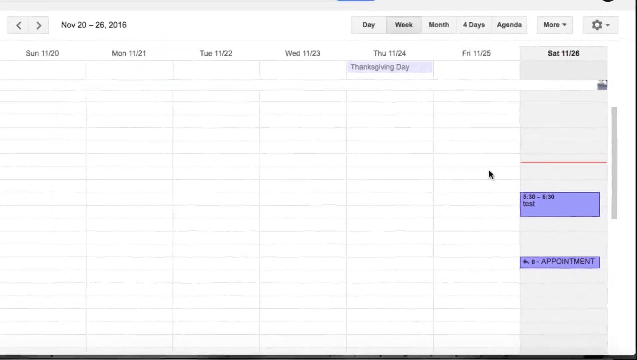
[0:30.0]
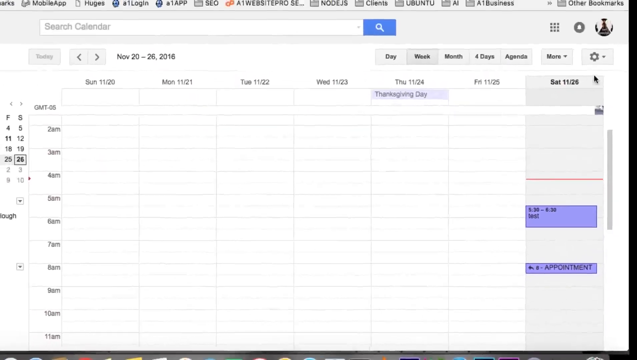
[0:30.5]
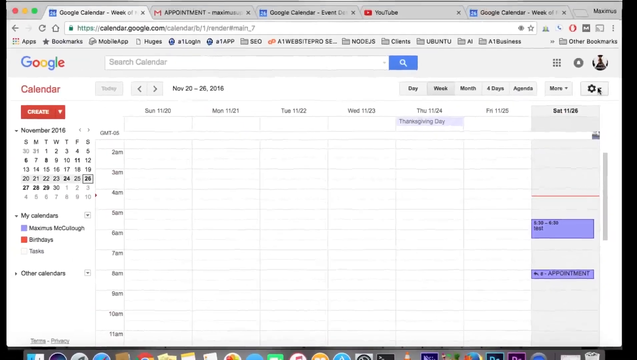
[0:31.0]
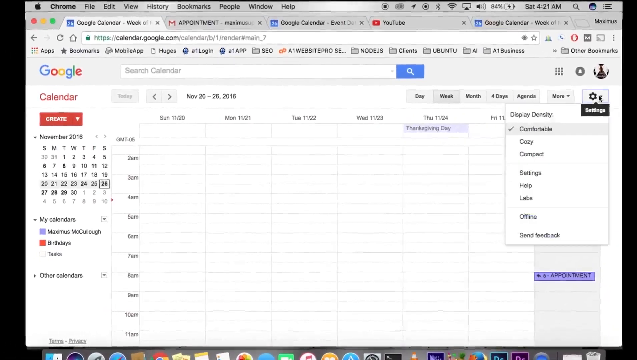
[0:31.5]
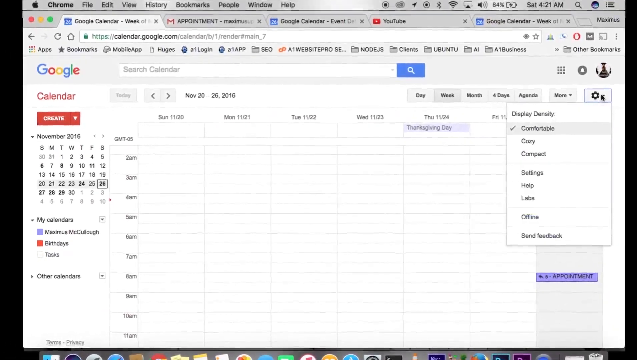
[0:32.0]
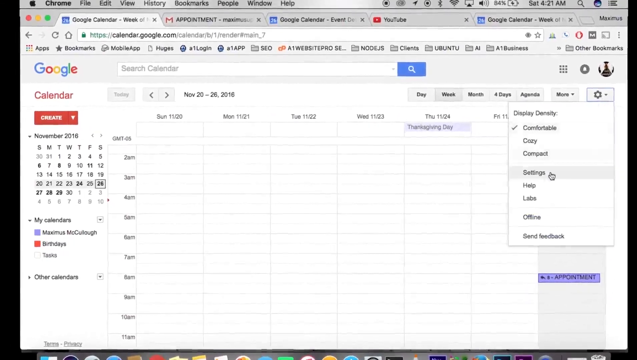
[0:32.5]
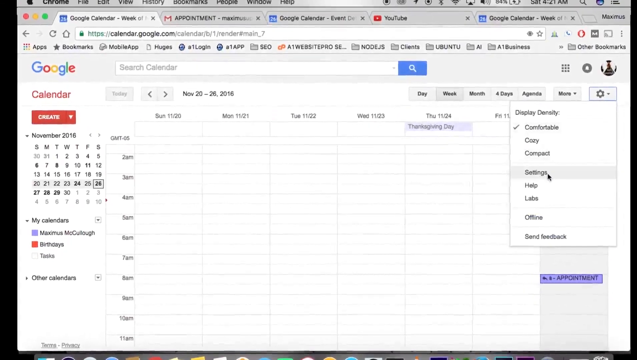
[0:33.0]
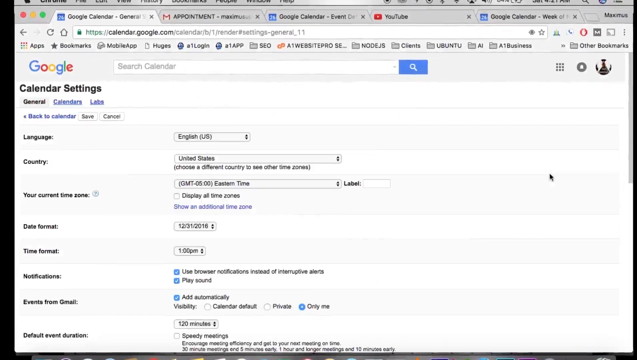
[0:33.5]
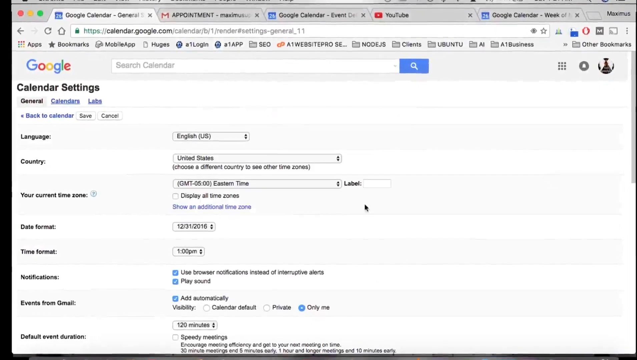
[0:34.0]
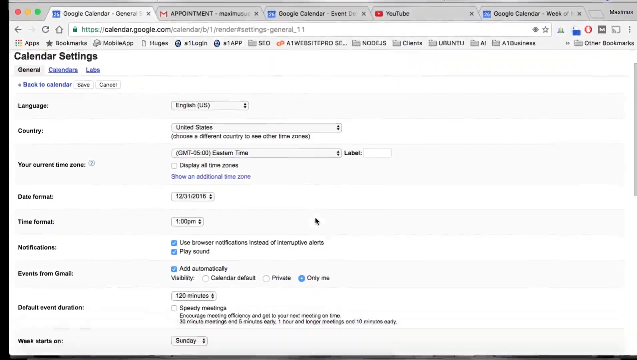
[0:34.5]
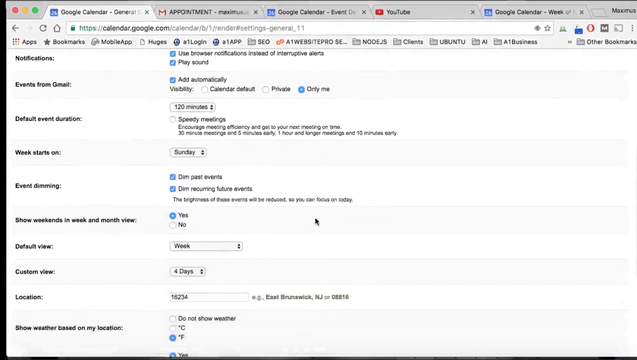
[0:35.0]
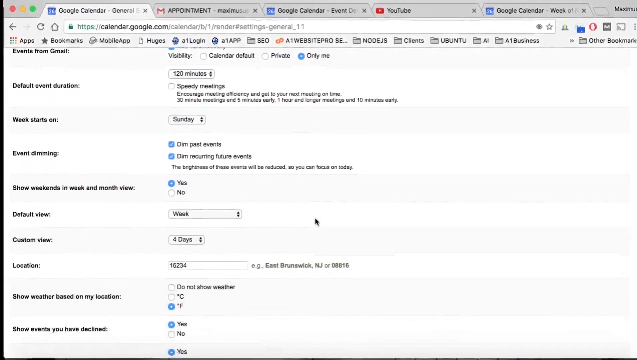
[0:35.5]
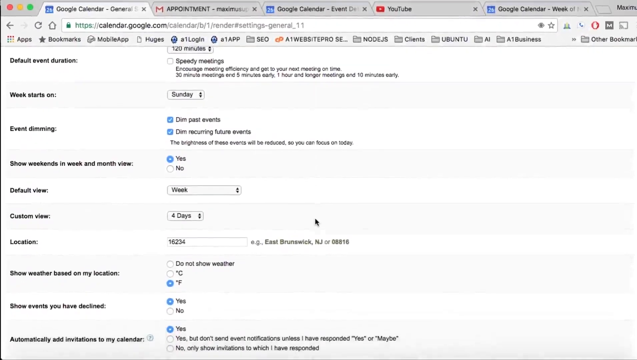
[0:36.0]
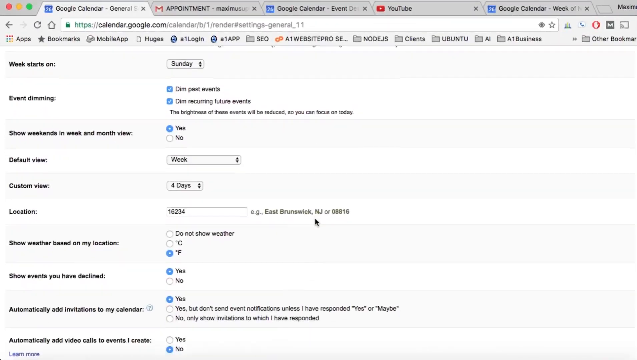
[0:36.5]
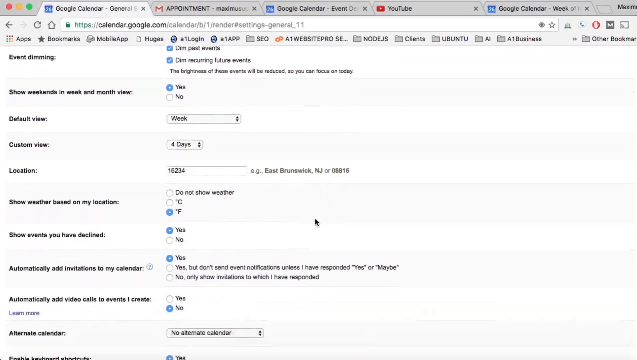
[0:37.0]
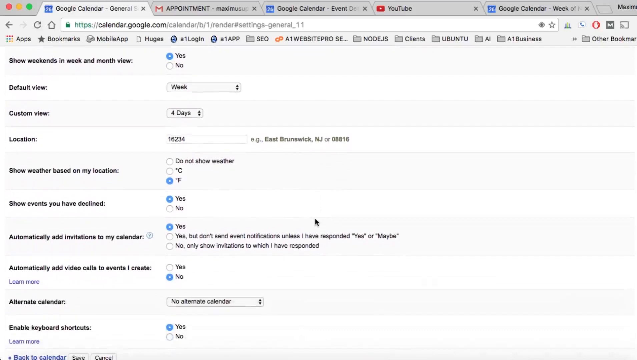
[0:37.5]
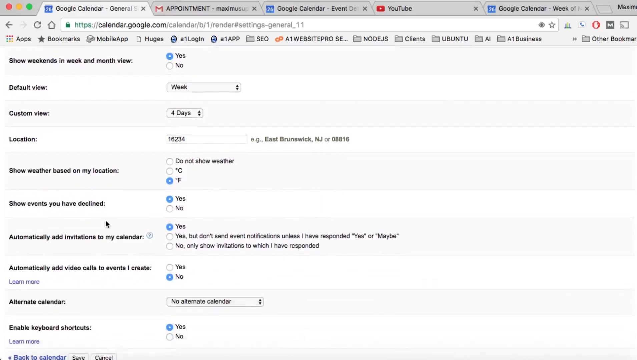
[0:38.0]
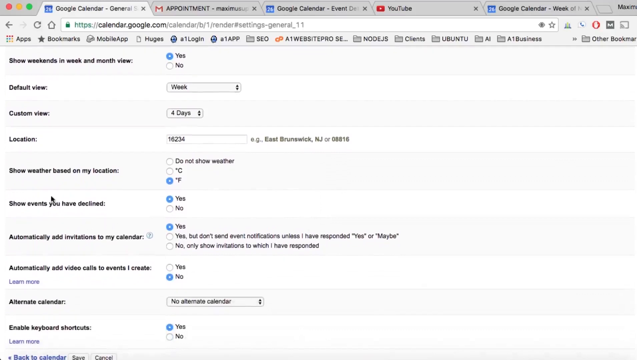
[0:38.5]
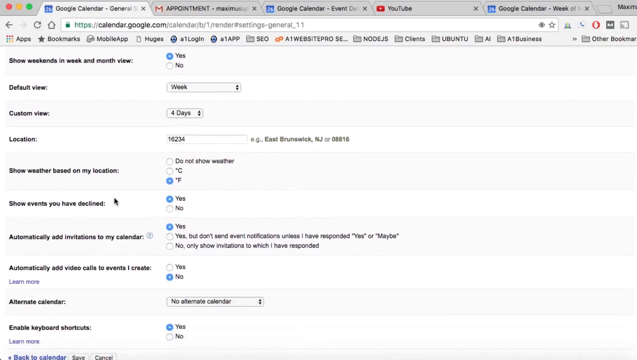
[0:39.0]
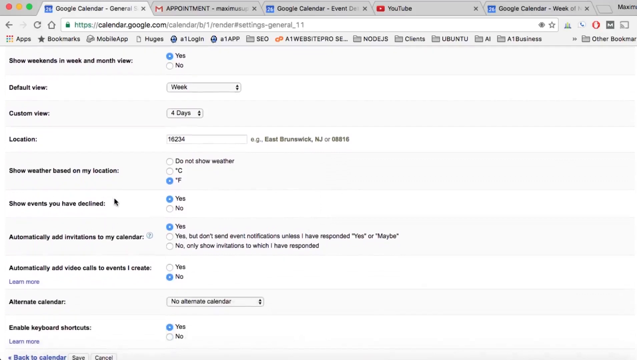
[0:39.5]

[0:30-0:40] A blank spreadsheet on a white background appears. Across the tops of the columns are the headings "Sunday 11/20", "Monday 11/21", "Tuesday 11/22", "Wednesday 11/23", "Thursday 11/24", "Friday 11/25" and, on the far right, "Saturday 11/26", a week's worth of dates. Under the Thursday 11/24 column, the words "Thanksgiving Day" appear in a light purple rectangular box, with the writing inside also light purple. In the far right Saturday 11/26 column there are entries: about halfway down, one for a test at a certain time, and further down, another for an appointment at a certain time. These entries are formatted like the Thanksgiving Day entry, in a purple box with dark purple writing.